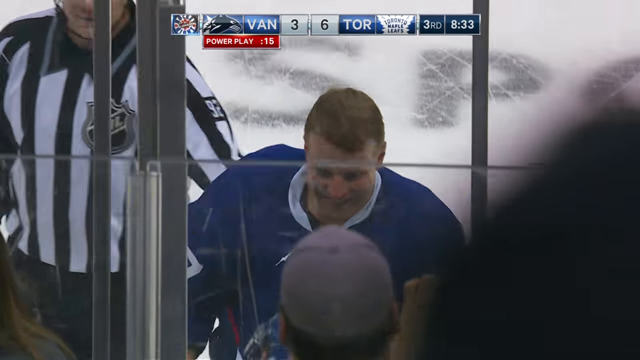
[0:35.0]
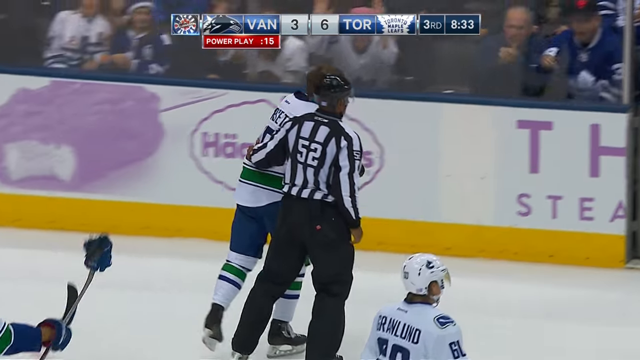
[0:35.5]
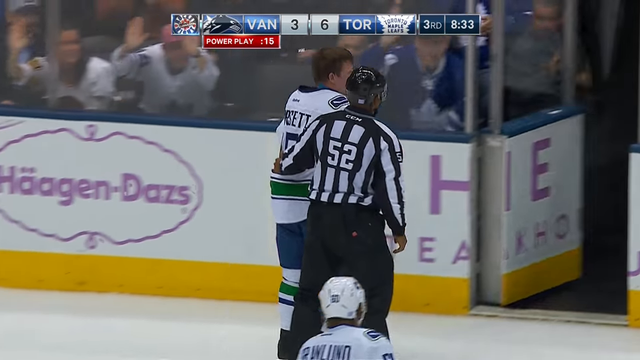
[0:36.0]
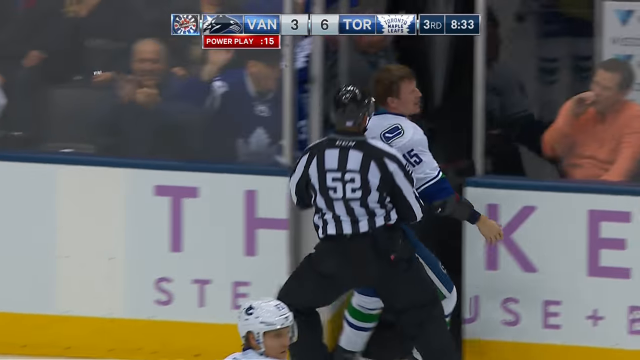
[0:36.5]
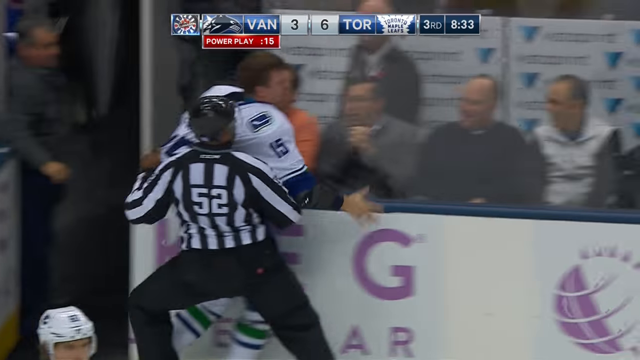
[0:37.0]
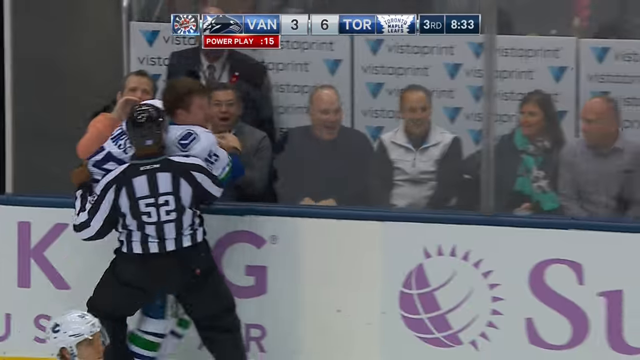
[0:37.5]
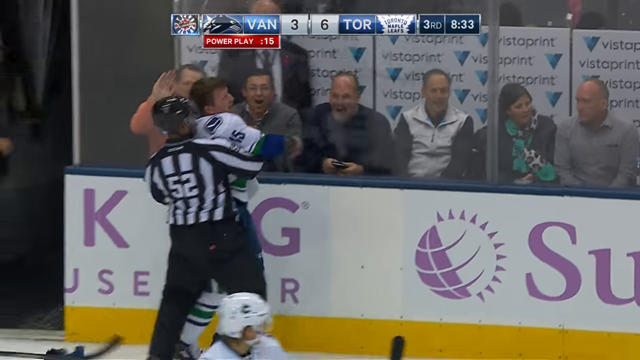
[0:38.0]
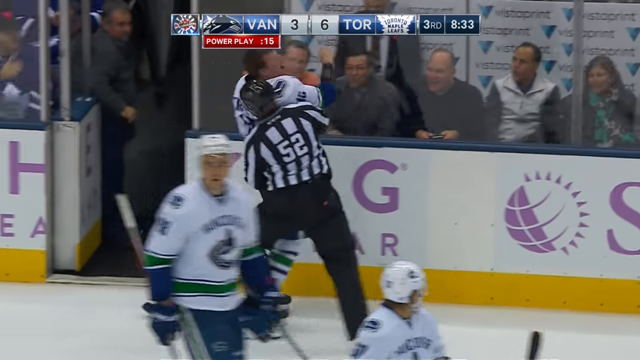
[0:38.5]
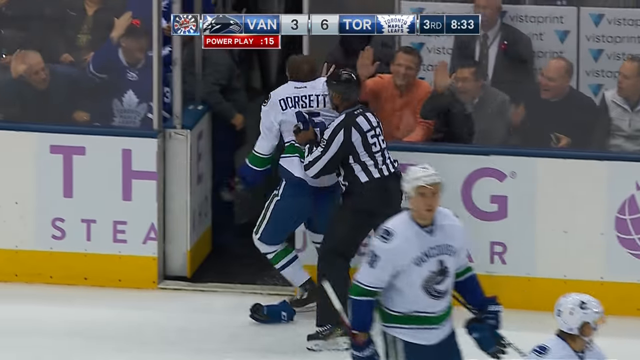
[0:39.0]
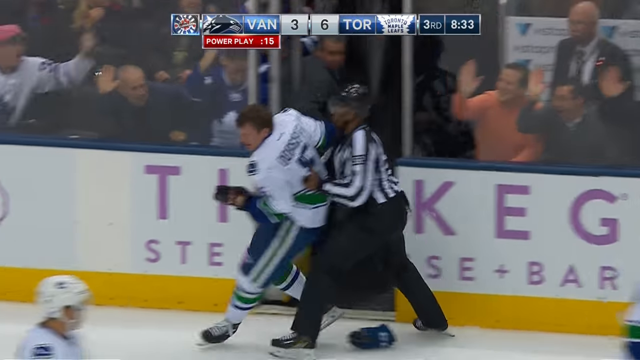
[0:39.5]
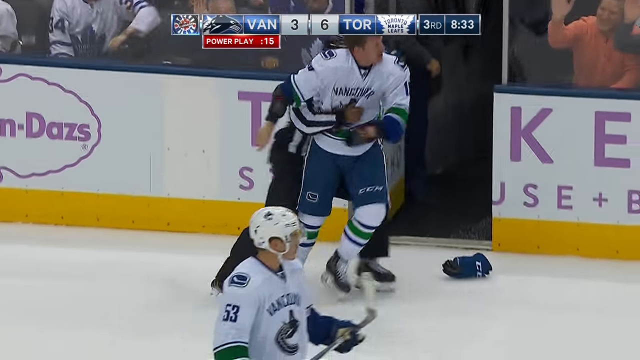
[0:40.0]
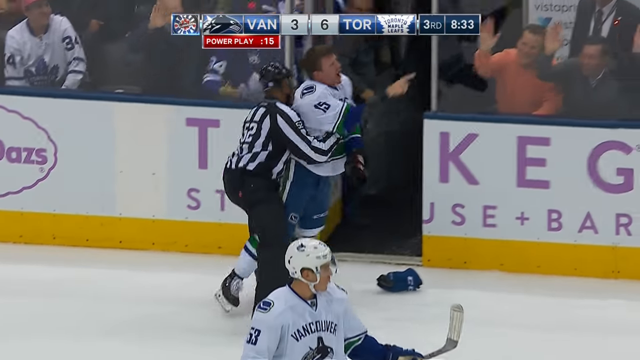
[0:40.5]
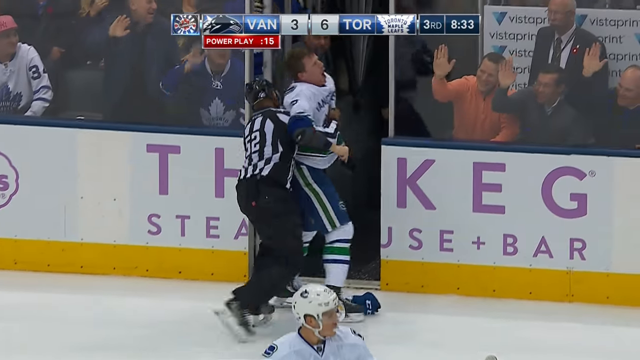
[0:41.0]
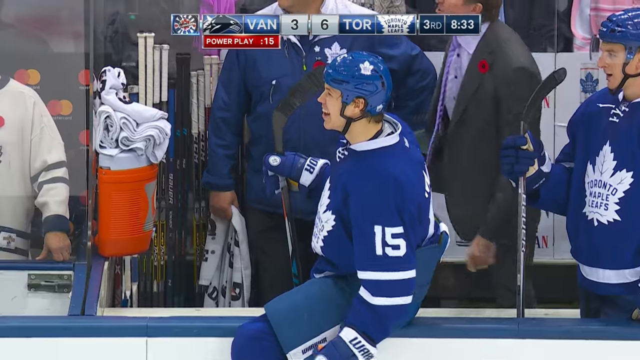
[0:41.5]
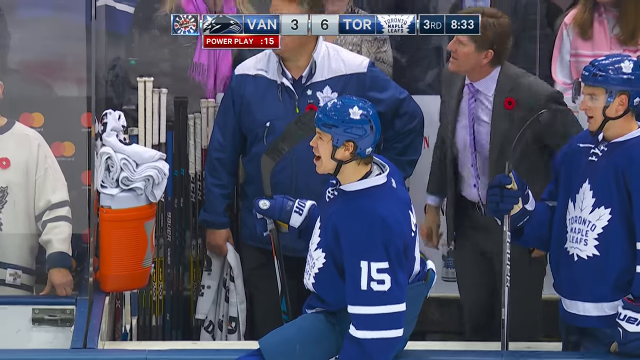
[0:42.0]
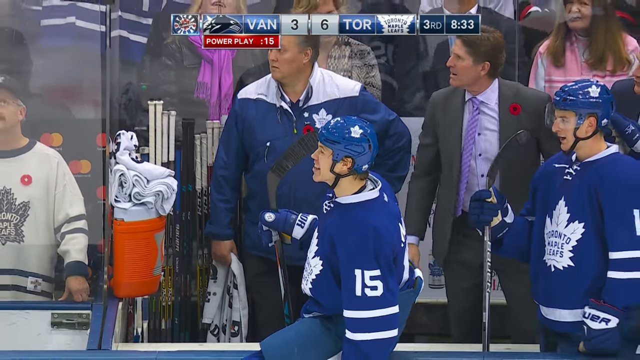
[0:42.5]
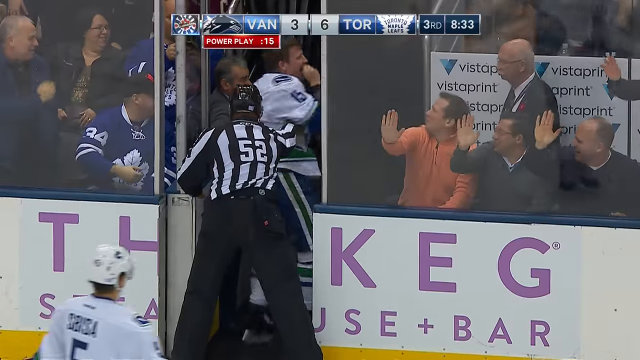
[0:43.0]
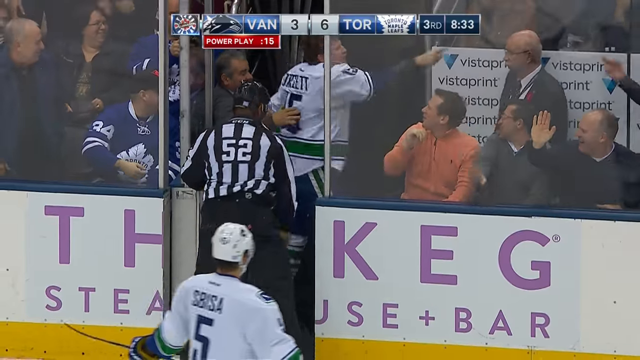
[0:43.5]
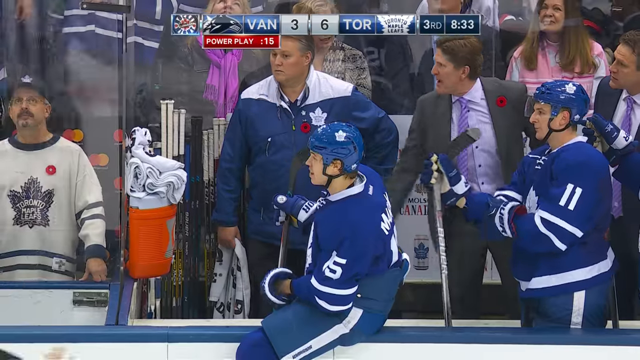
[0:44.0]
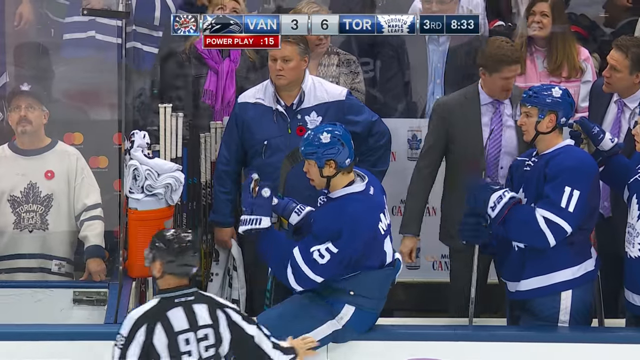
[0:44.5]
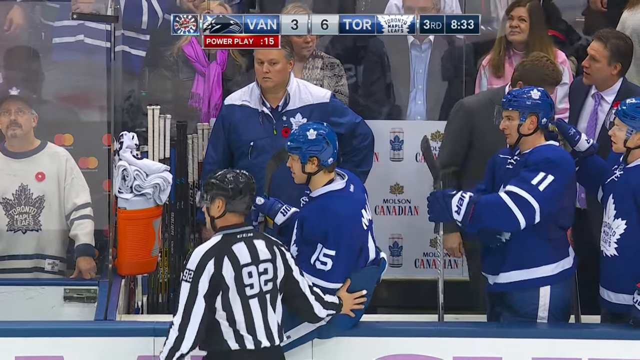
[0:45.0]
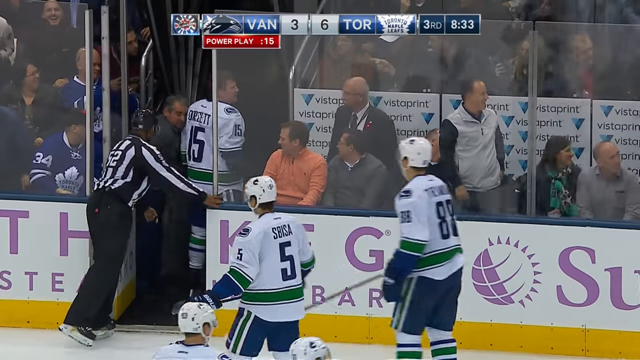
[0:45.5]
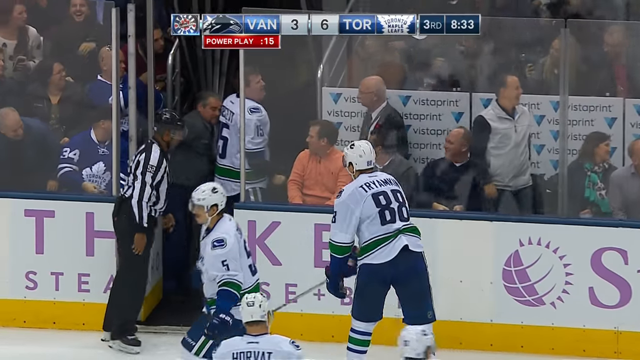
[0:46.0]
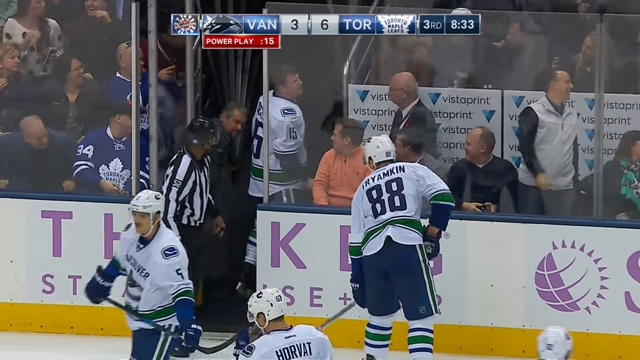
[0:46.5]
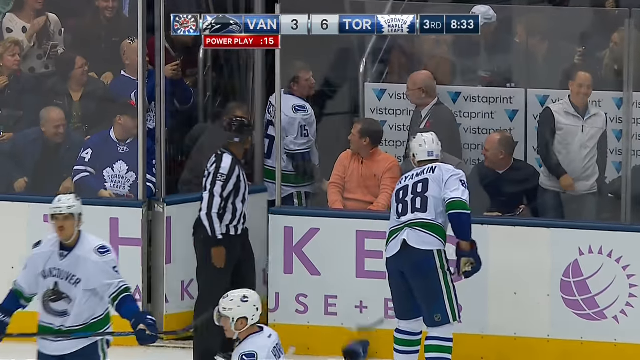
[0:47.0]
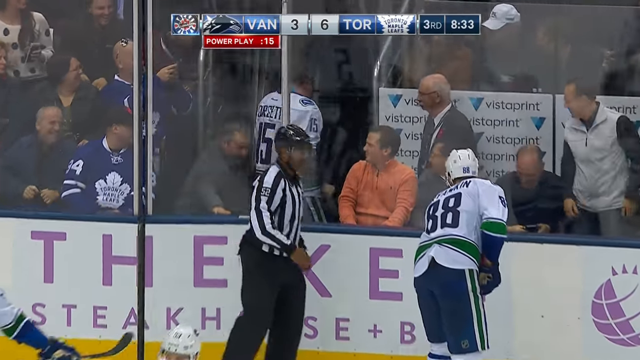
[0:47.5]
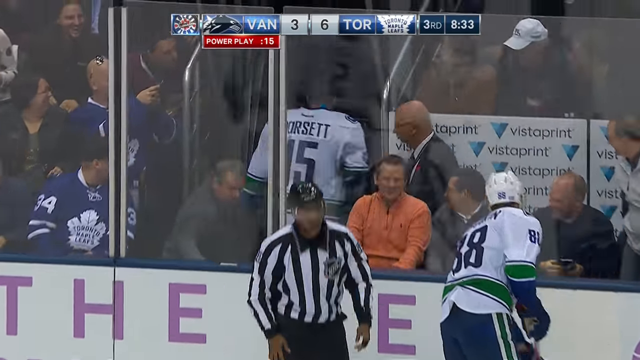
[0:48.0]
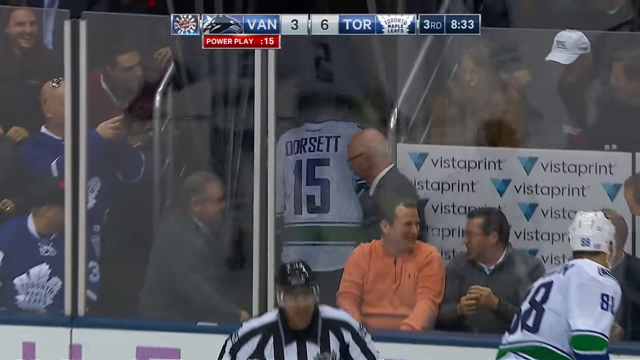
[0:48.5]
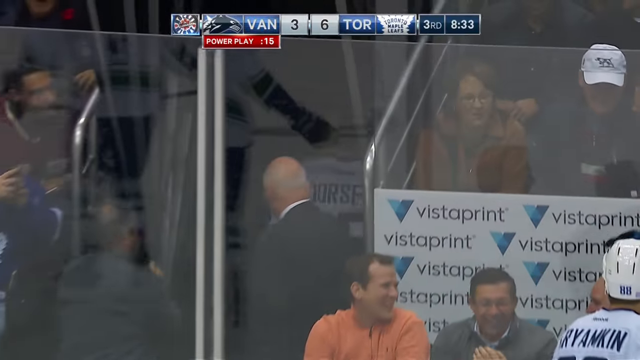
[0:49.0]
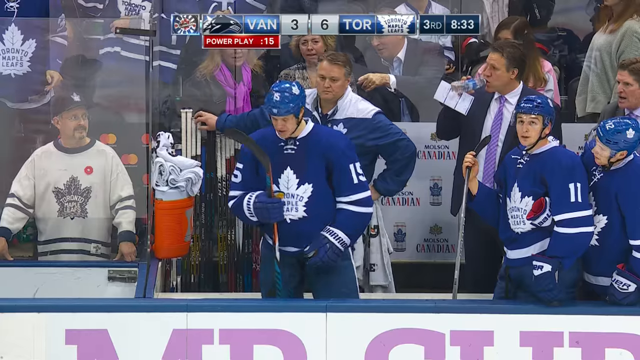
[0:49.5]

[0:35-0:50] The Vancouver player tries to skate around the referee to get to the Toronto player, who is sitting on the rail. The Toronto player taunts the Vancouver player, who tries to get at him and yells angrily, while the Toronto player laughs and jeers; they are in the Toronto stadium. The Toronto coach, wearing a suit and tie that seems to be dark grey, also yells back at the Vancouver player. Many people in the stands laugh, jeer and hit the glass as the Vancouver player is skated into the penalty box and held back by the referee. Multiple Vancouver players skate around. The ice on the rink is white. A small "SN" logo is in the bottom right-hand corner. A power play badge showing 15 seconds appears right below Vancouver's three-letter abbreviation on the scorecard.